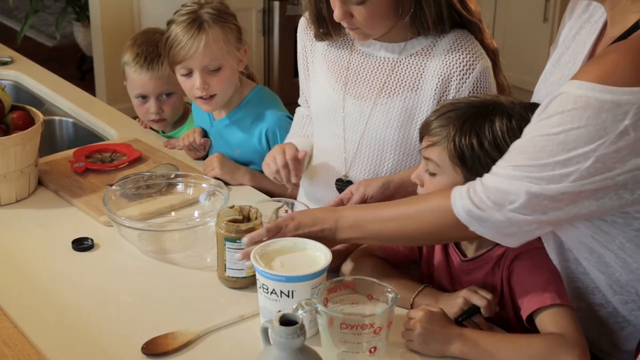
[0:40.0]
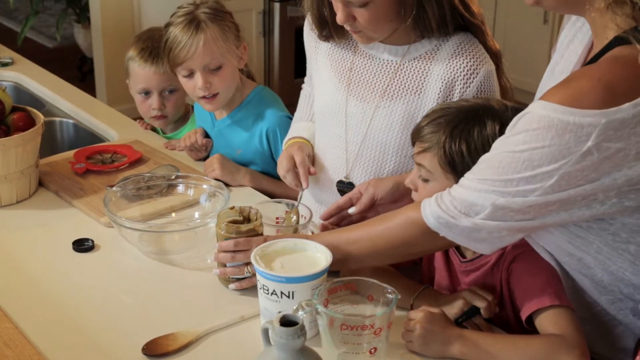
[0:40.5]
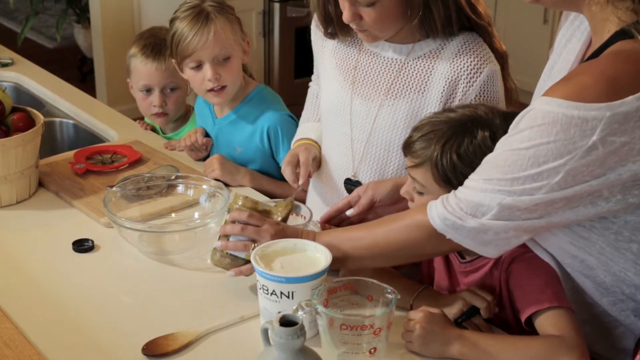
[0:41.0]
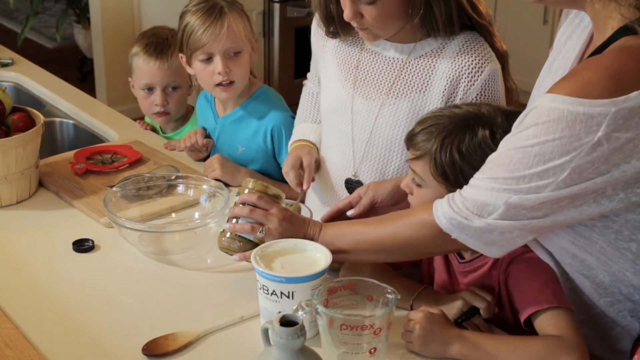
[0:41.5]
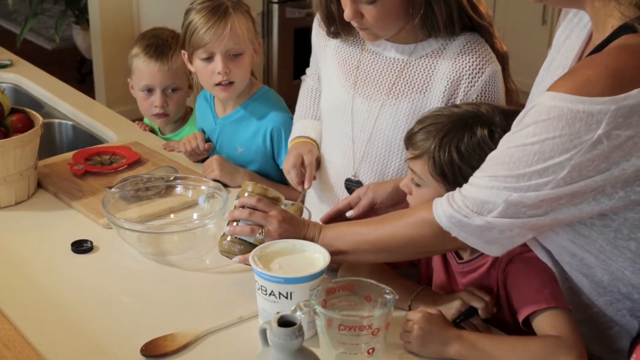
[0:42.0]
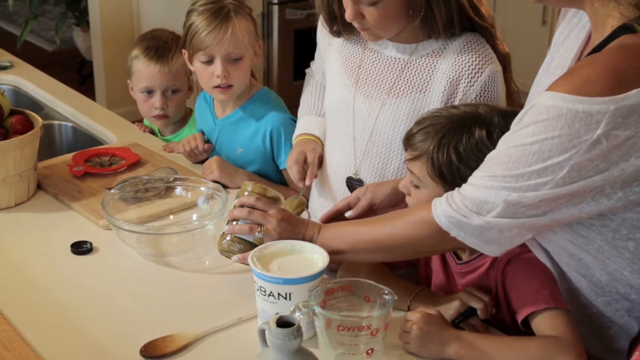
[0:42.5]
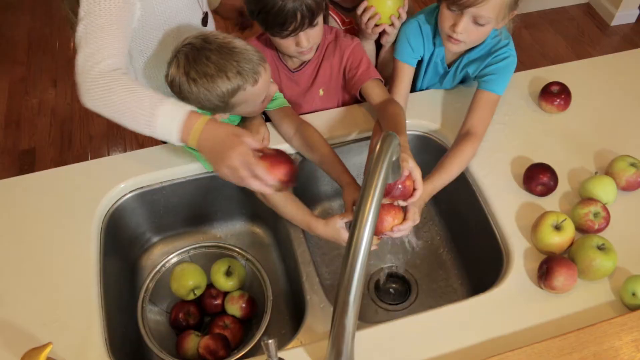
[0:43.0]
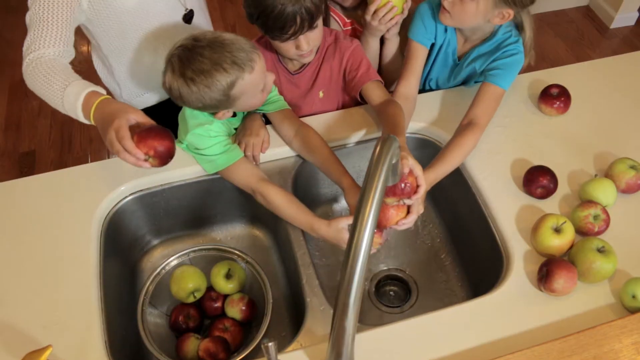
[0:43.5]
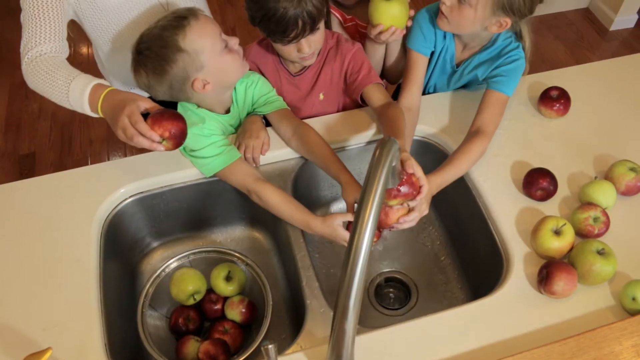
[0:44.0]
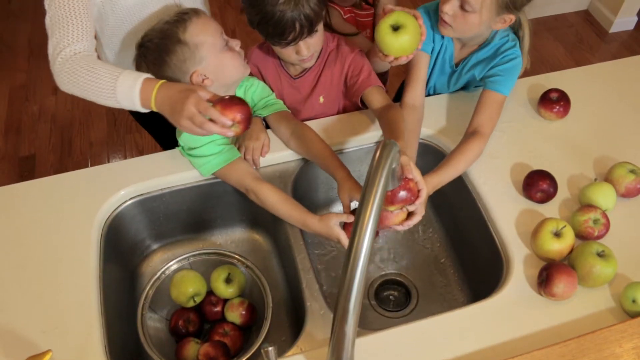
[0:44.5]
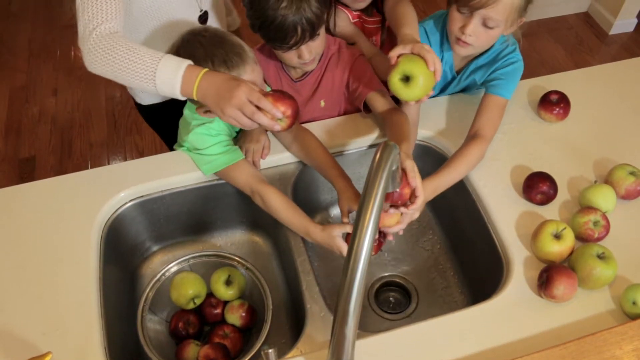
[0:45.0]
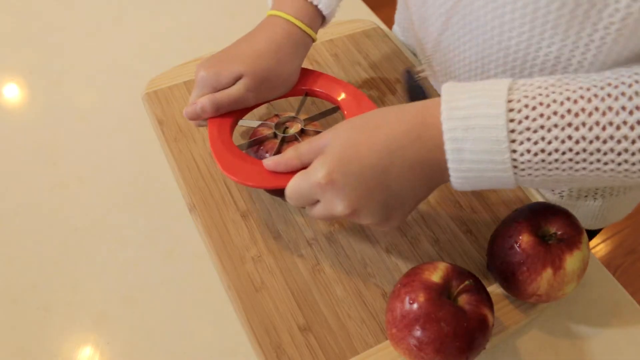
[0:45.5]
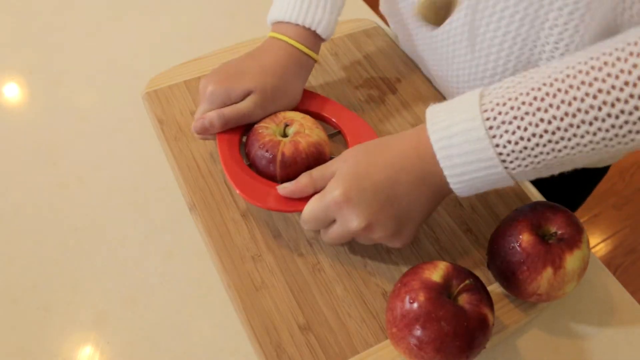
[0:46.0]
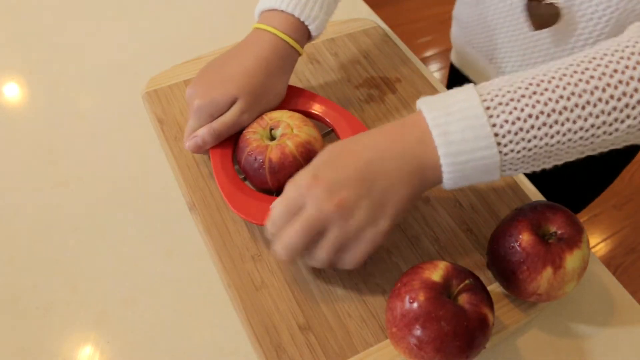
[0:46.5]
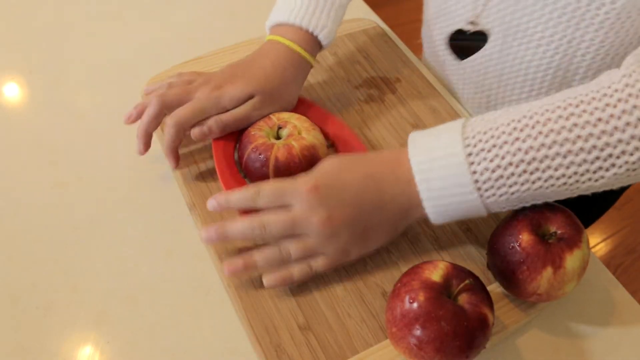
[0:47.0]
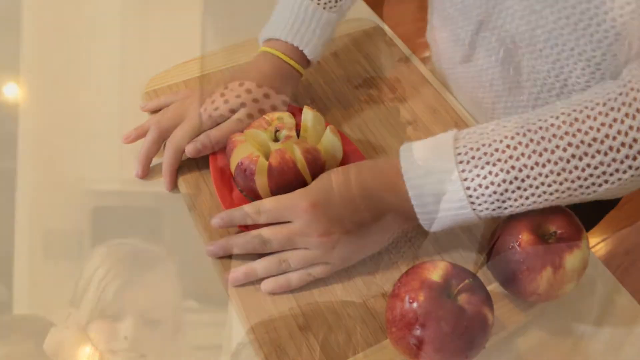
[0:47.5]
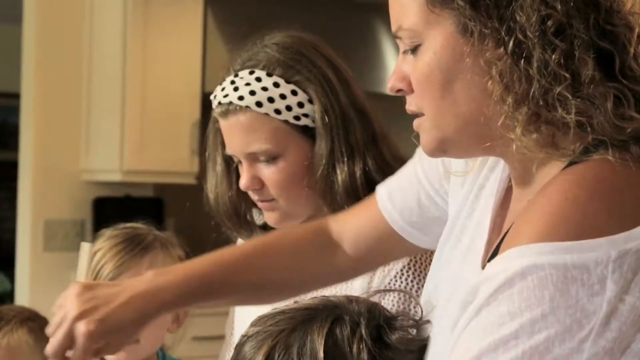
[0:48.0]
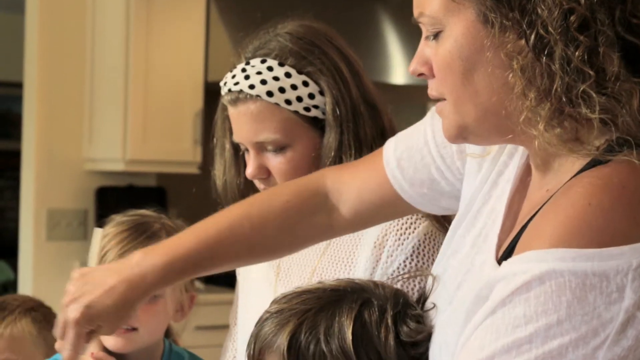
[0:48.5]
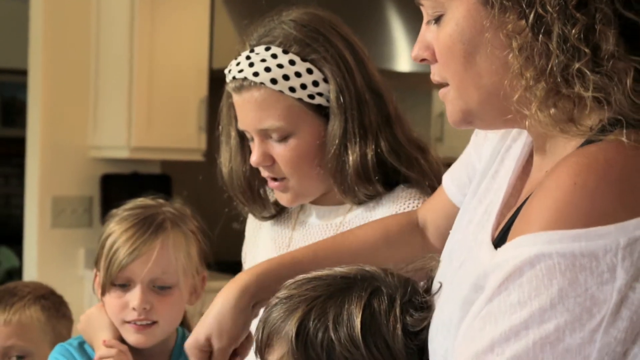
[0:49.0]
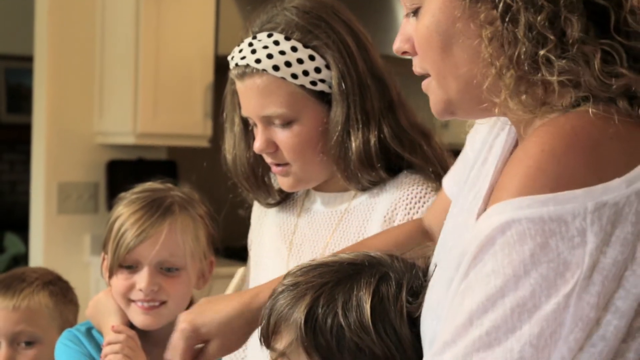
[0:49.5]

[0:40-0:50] A row of children, possibly with one adult behind them, are cooking; they look like they are preparing something. There is yogurt, peanut butter, some apple cutters, a glass bowl and some measuring cups, and it looks like they are putting things together. Then three children rinse apples in a stainless steel sink, with several apples on the counter next to them. Each of them holds an apple. Another, taller person in white behind them holds an apple; it might be a taller child. Some apples are in a glass bowl on the other side of the sink. Next, only the hands and arms of the tall child in the long-sleeve white sweater are visible as she uses an apple cutter to slice through an apple on a cutting board. The adult female then stirs things with the children, who all watch and smile as she stirs. The girl with the white sweater, the black and white polka dot headband and long brown hair stands next to her; she is almost as tall as the adult but is definitely one of the children.